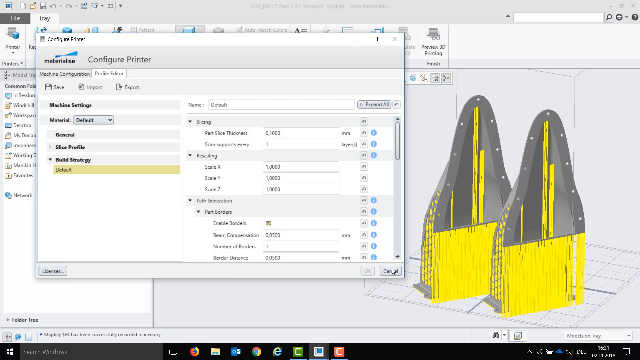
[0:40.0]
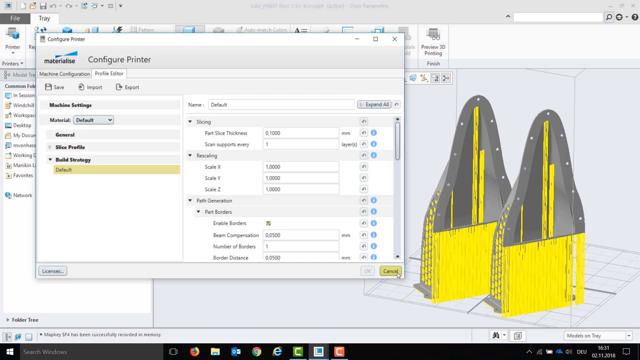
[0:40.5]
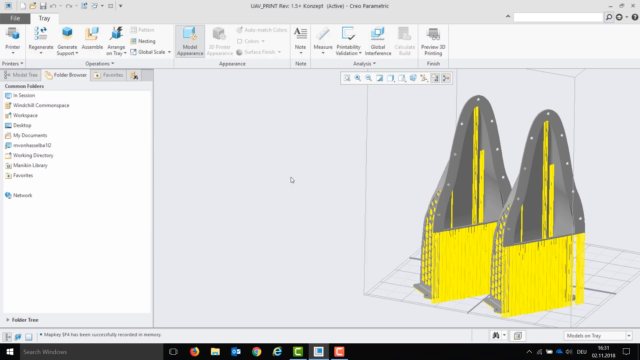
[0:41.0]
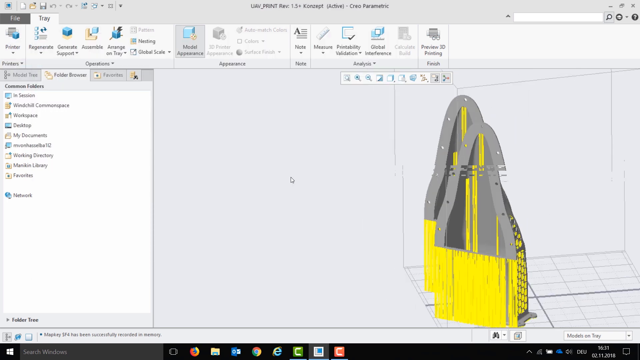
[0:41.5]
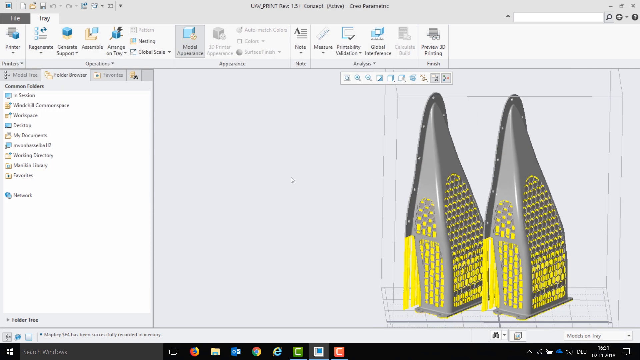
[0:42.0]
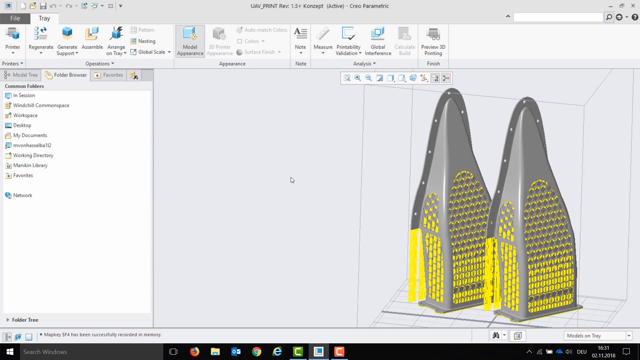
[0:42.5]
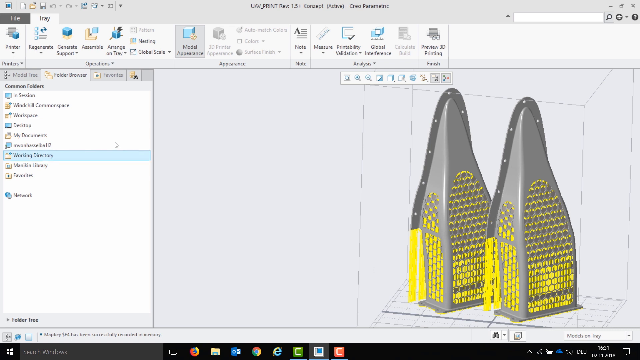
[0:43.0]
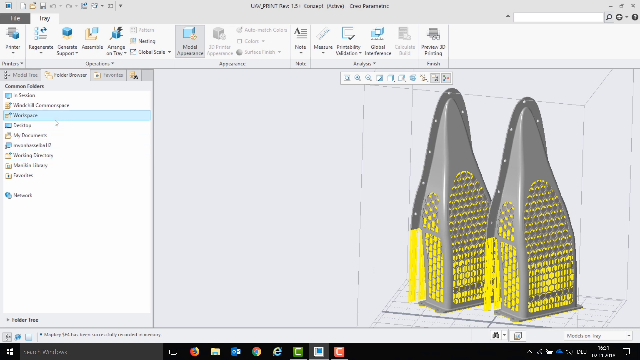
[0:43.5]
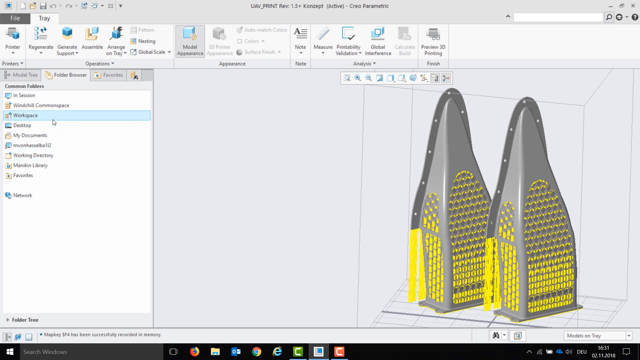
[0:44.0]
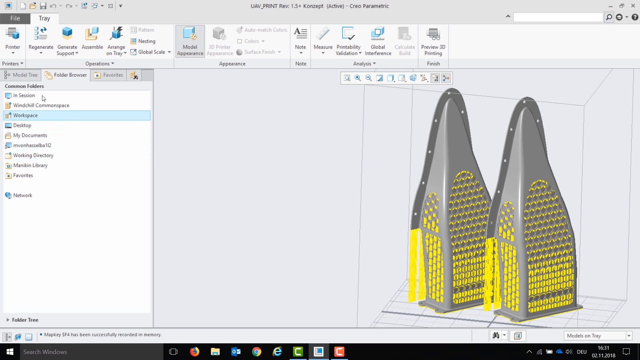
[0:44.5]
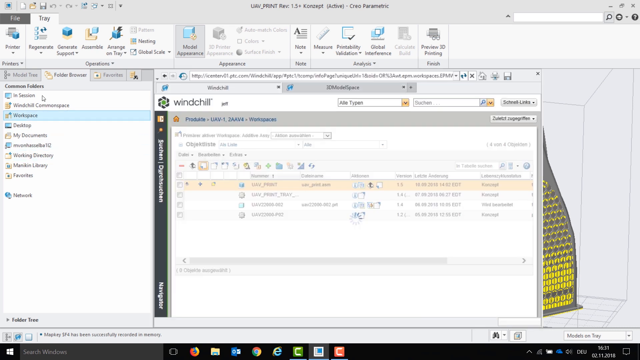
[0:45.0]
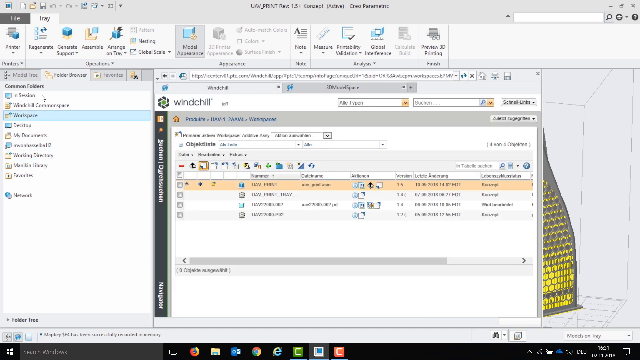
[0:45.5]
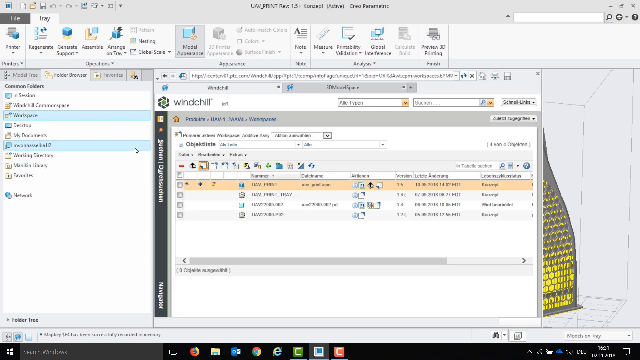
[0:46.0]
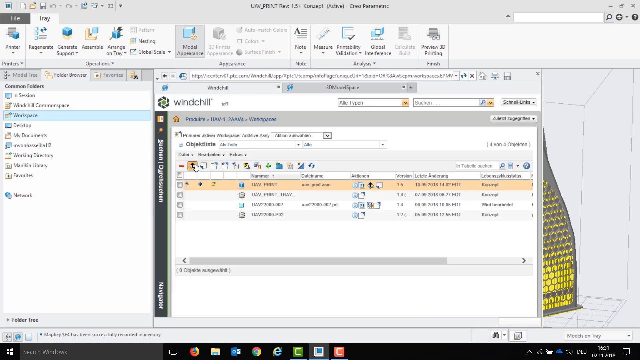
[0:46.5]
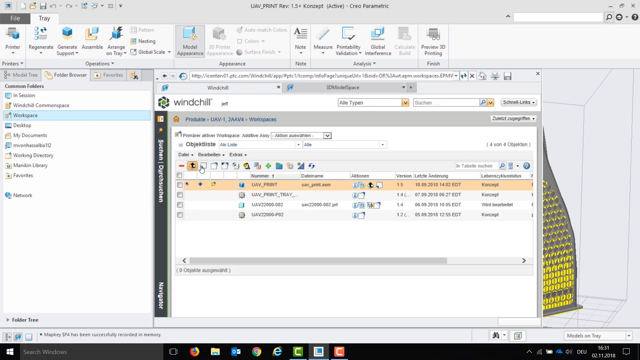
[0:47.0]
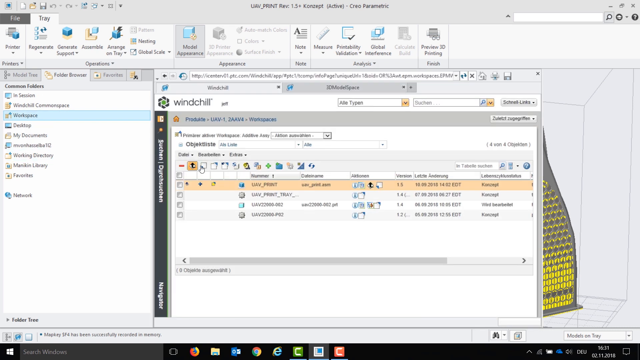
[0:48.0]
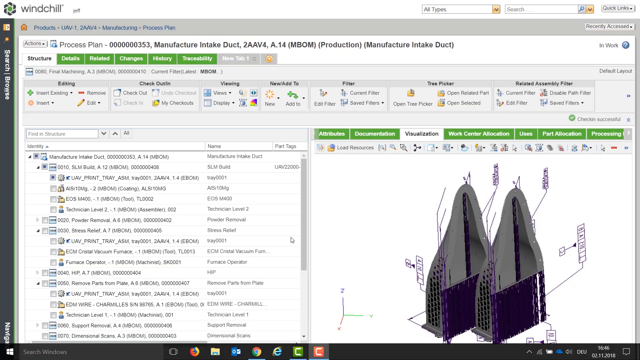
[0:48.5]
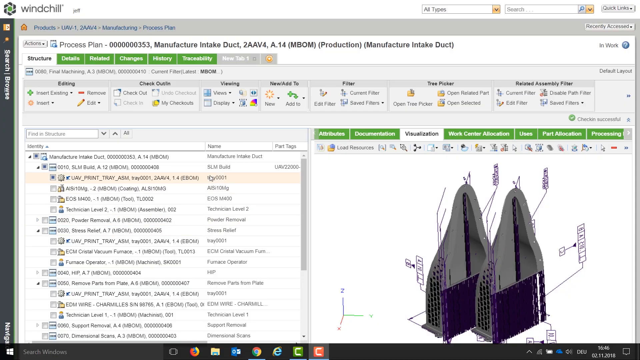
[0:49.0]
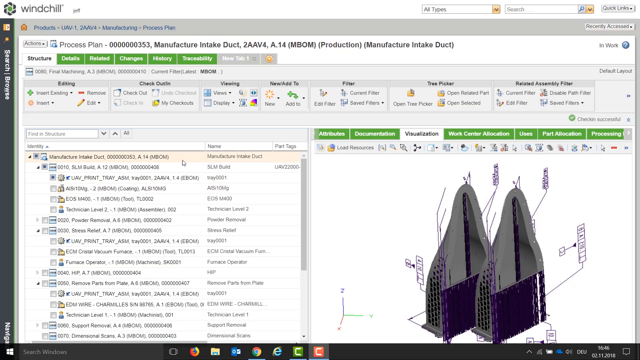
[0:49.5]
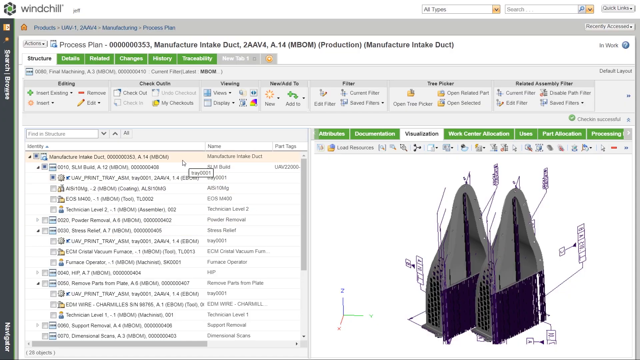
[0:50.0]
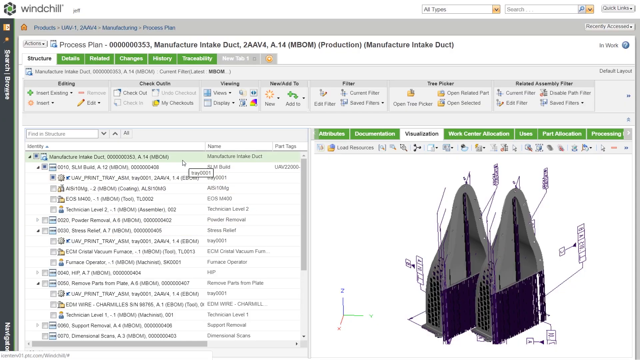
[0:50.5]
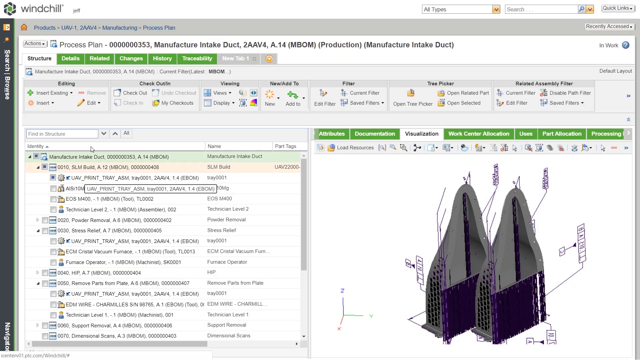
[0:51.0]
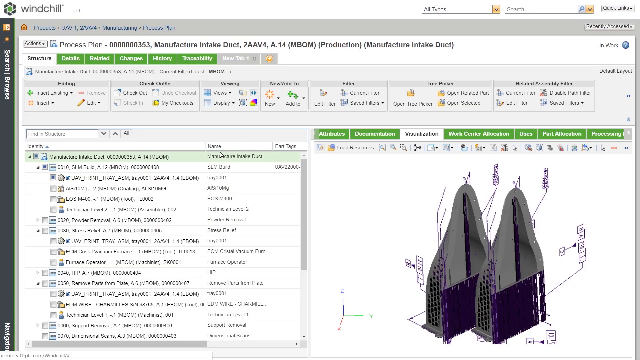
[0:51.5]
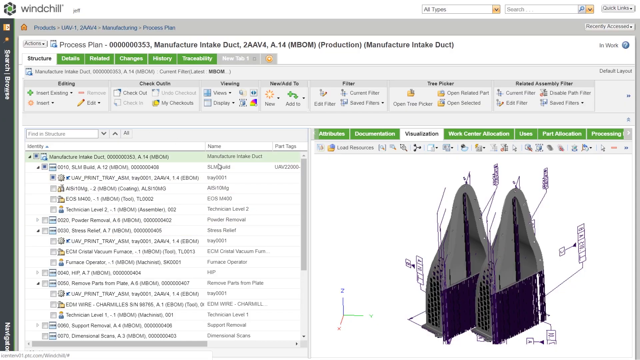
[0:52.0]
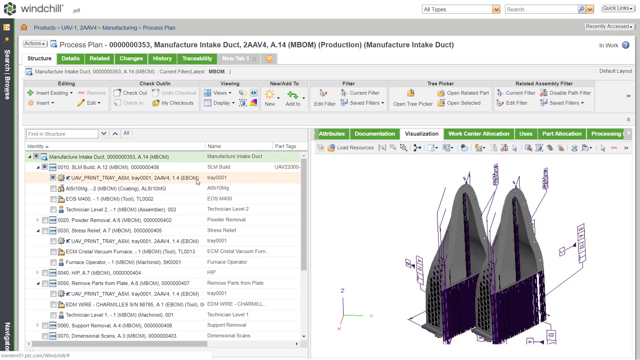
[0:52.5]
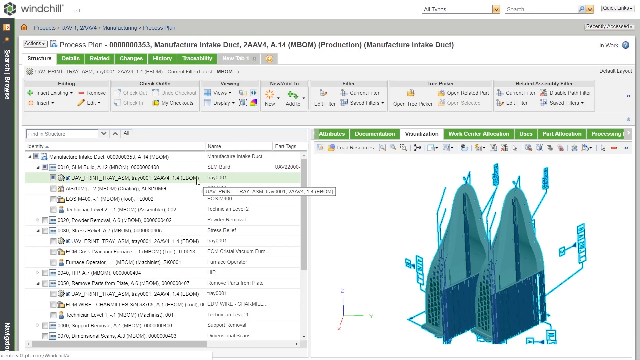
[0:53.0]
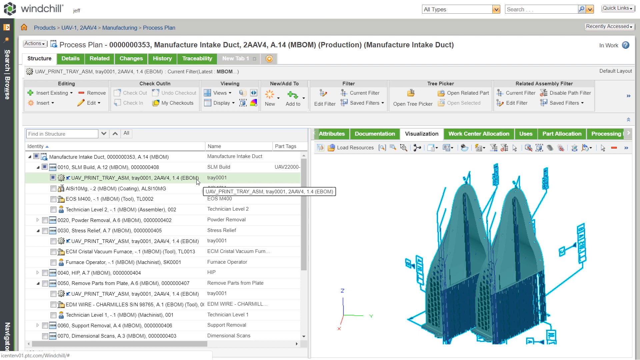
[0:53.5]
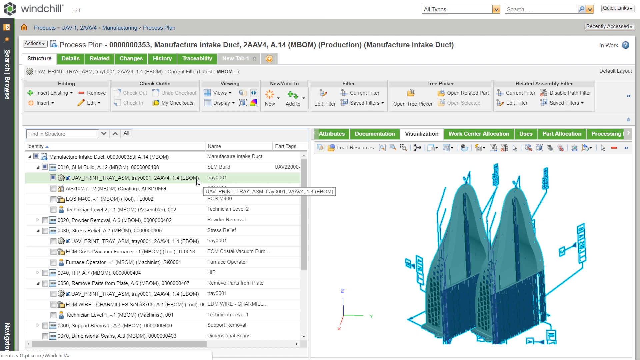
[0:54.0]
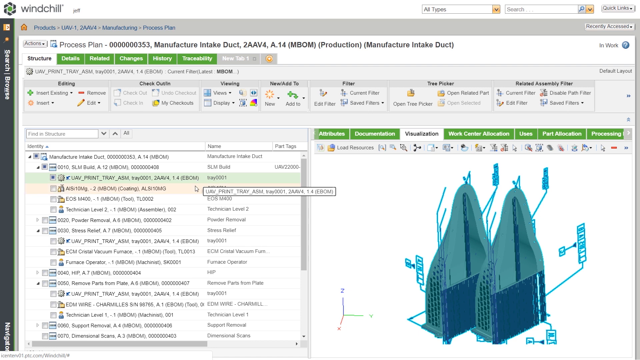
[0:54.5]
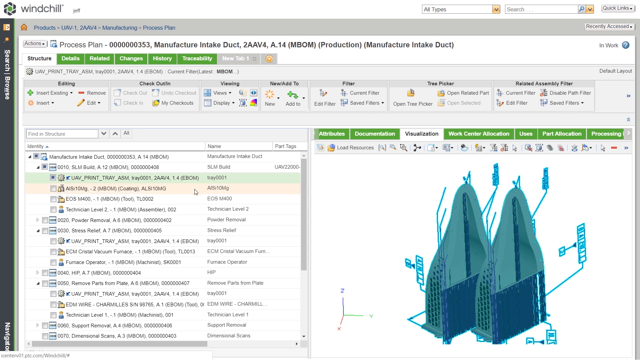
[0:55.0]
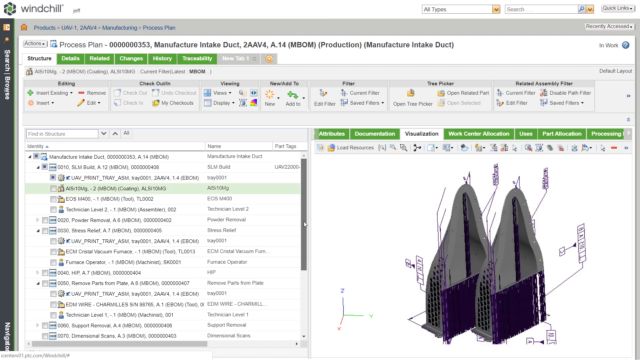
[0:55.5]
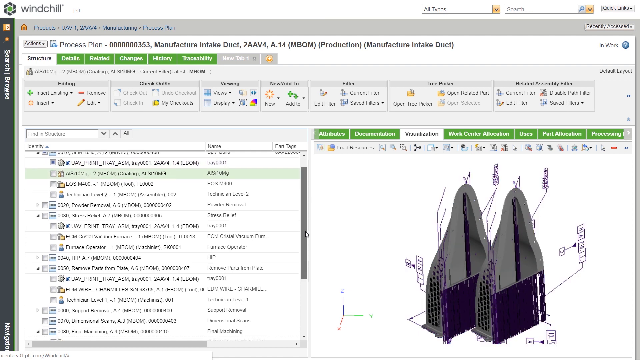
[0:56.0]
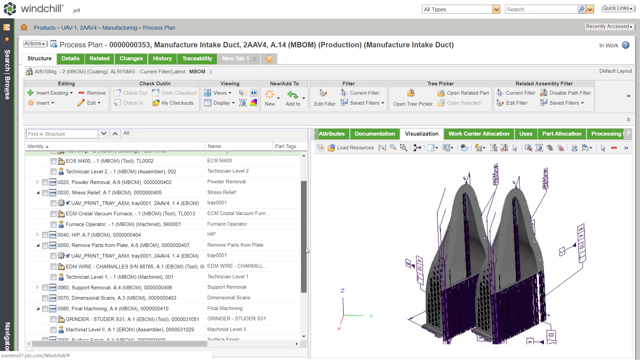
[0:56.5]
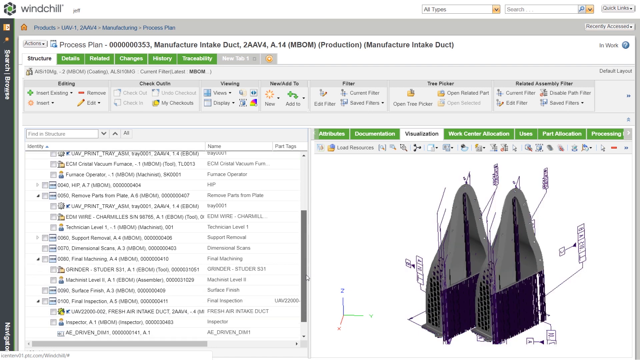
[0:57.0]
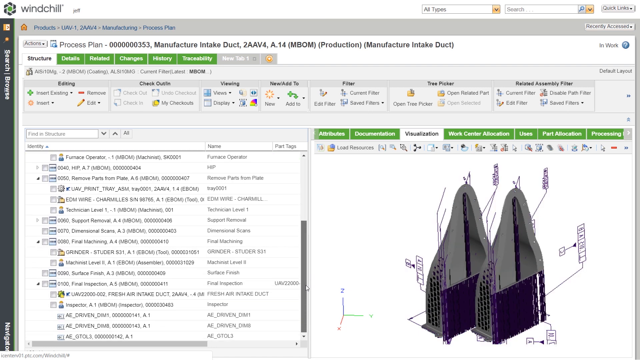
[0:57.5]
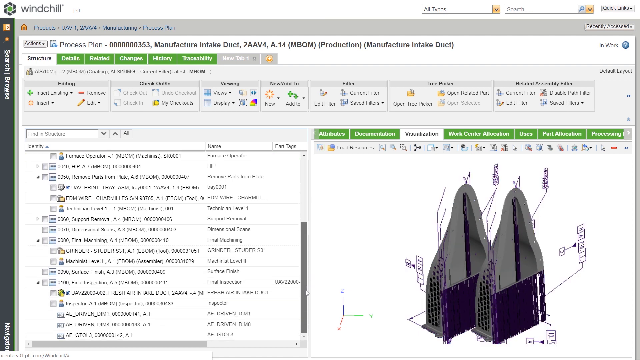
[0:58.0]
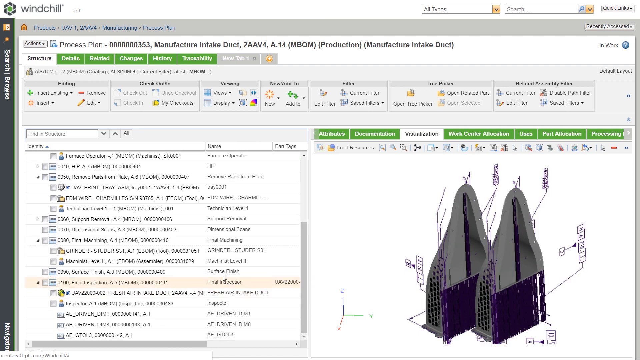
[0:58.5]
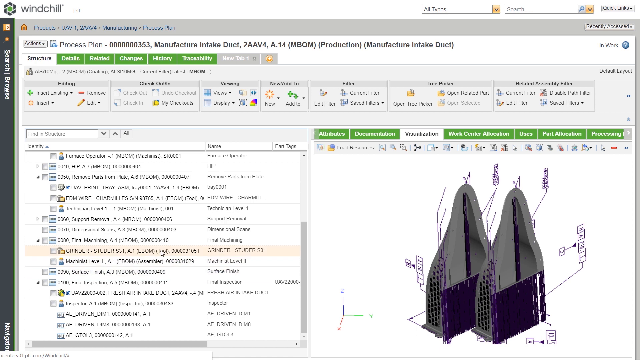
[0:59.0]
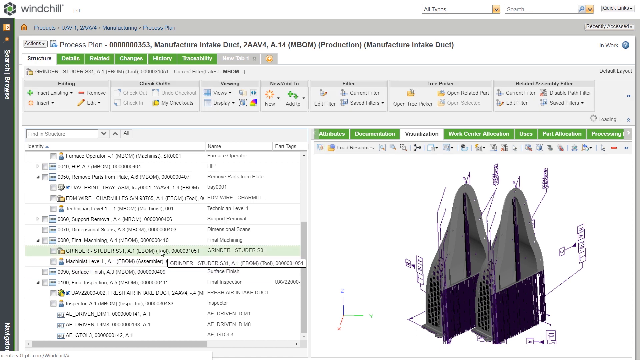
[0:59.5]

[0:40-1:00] A screen grab of a computer shows someone using 3D modeling type software with a configure printer window open. They select cancel so as not to print, close the window, and two yellow and gray pyramidal type objects appear next to each other on the right side of the screen. The objects are rotated in 3D. A tab on the left side of the screen, highlighted blue, reads "workspace"; they open it, highlight the first item and then a series of four items whose text cannot be made out. They select another square, whose label also cannot be seen, which opens a tab that says "structure". They click the first item, which says "manufacture intake duct", and the gray and yellow pieces turn gray and purple. Clicking the second item changes them to a tealish green color. They scroll down and click another item.